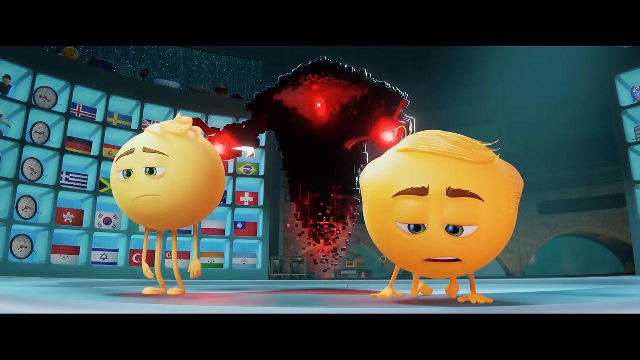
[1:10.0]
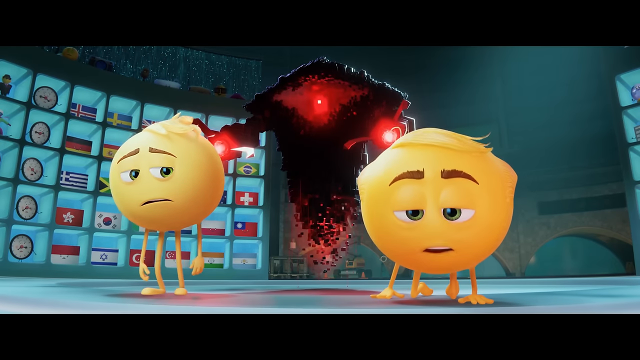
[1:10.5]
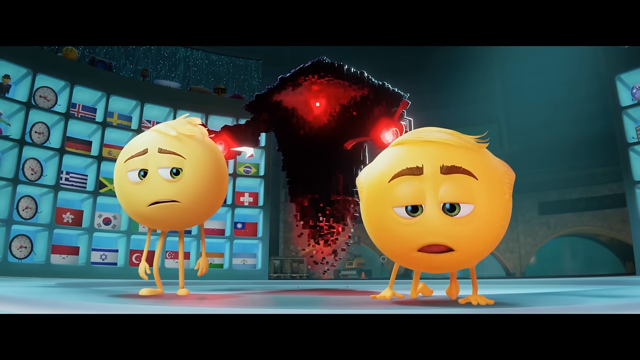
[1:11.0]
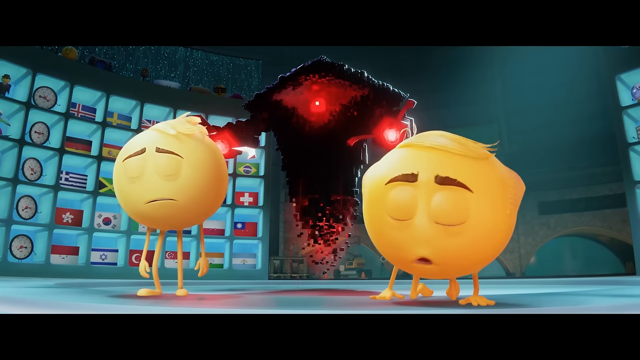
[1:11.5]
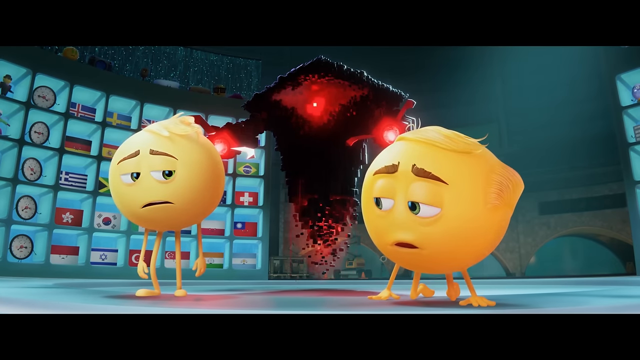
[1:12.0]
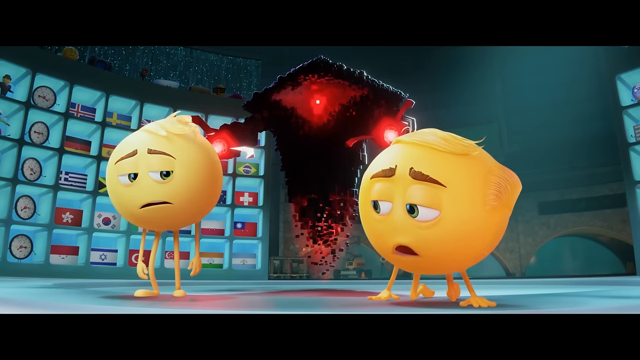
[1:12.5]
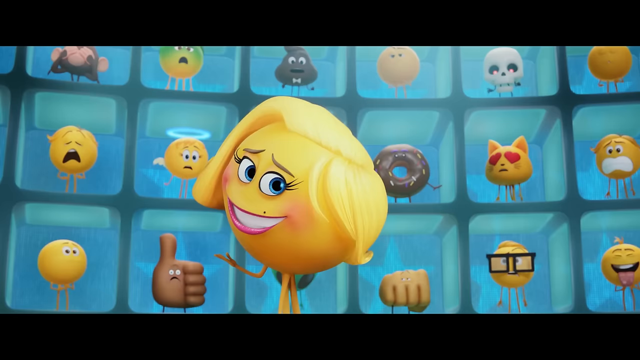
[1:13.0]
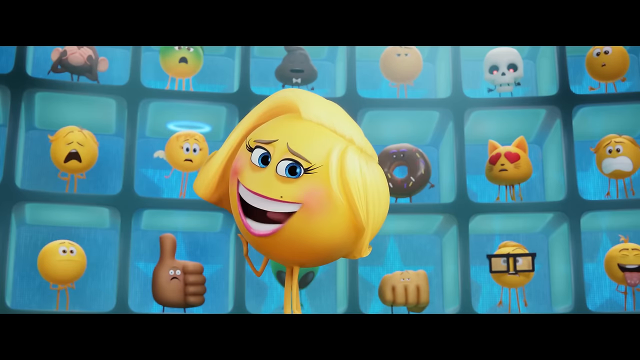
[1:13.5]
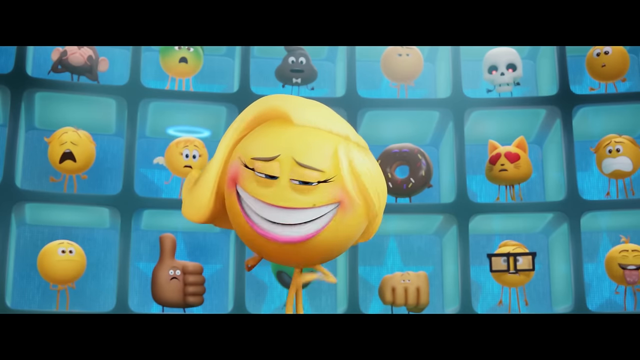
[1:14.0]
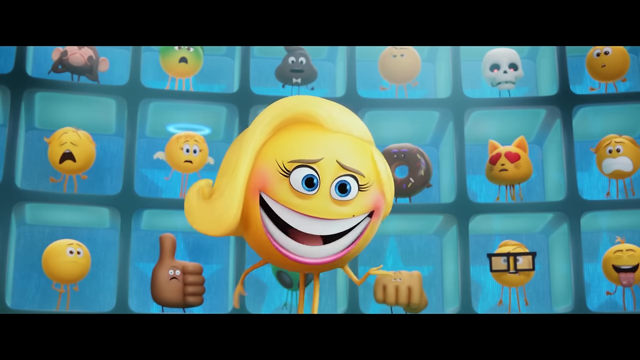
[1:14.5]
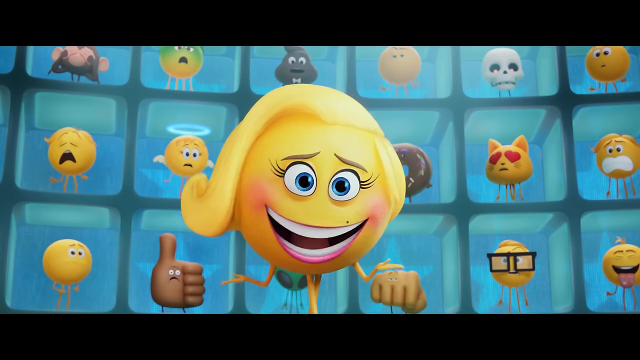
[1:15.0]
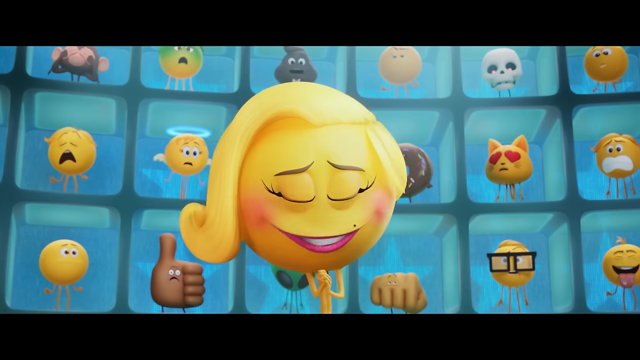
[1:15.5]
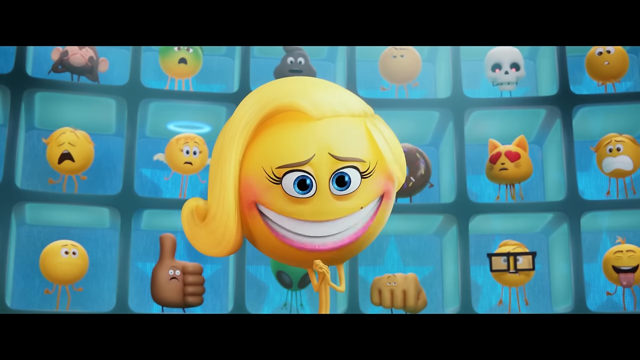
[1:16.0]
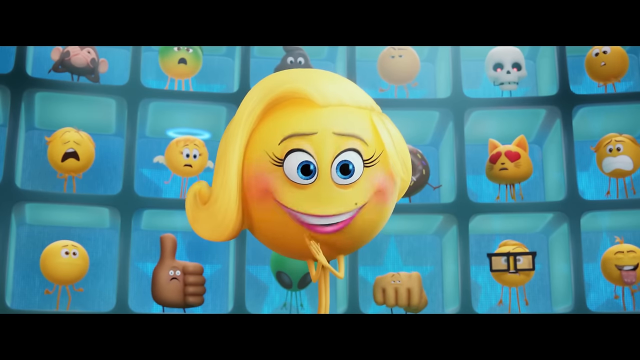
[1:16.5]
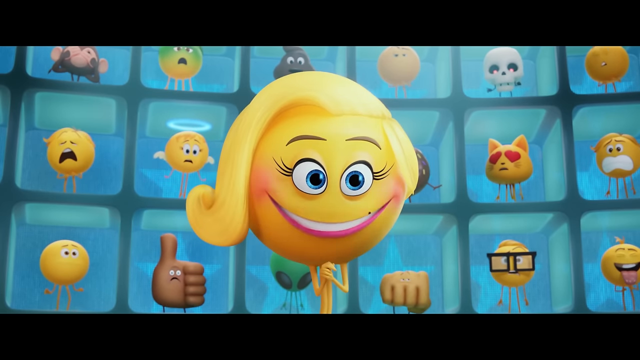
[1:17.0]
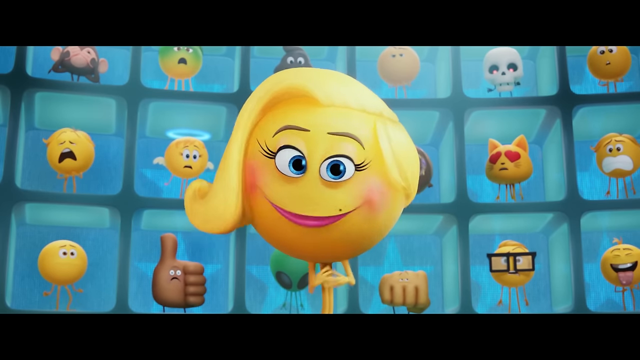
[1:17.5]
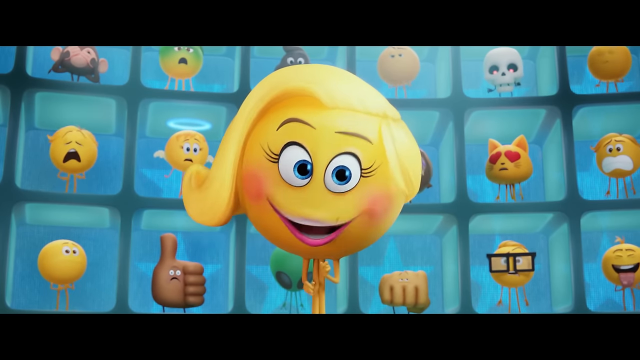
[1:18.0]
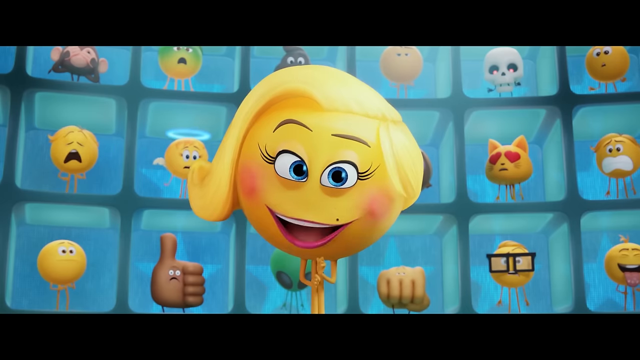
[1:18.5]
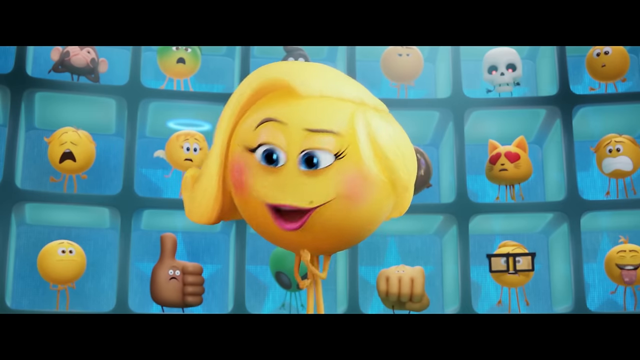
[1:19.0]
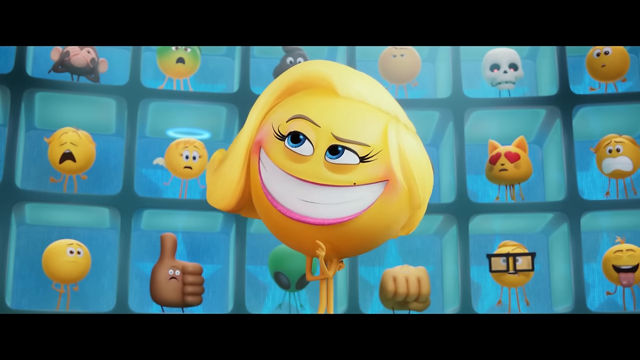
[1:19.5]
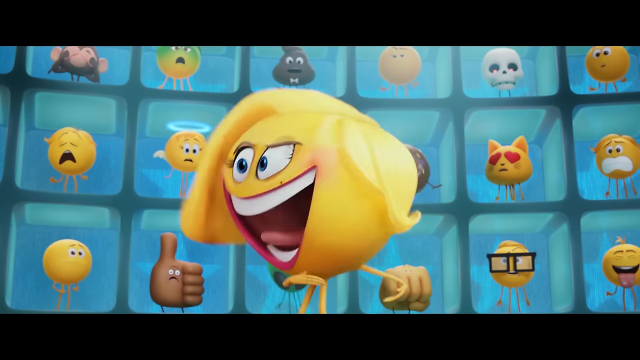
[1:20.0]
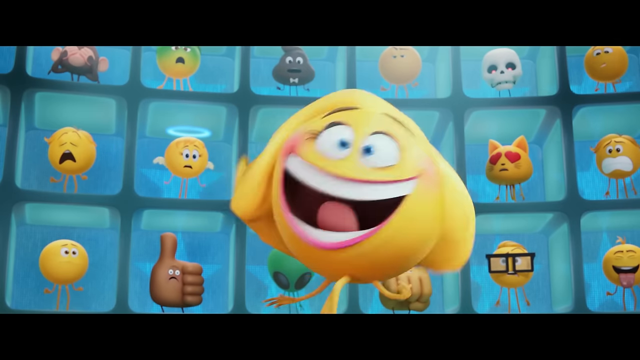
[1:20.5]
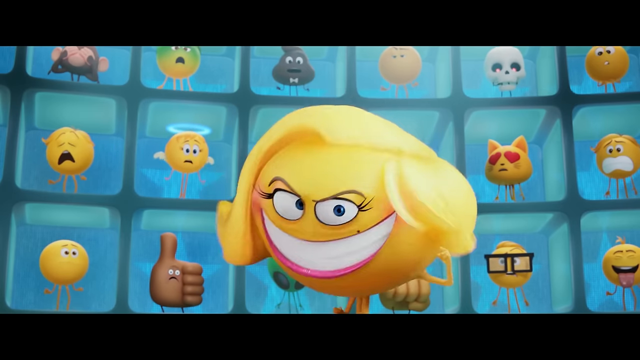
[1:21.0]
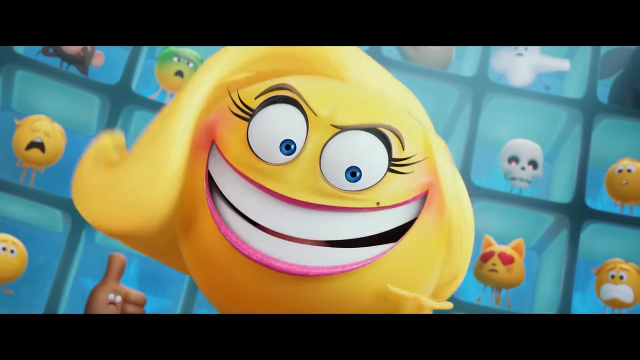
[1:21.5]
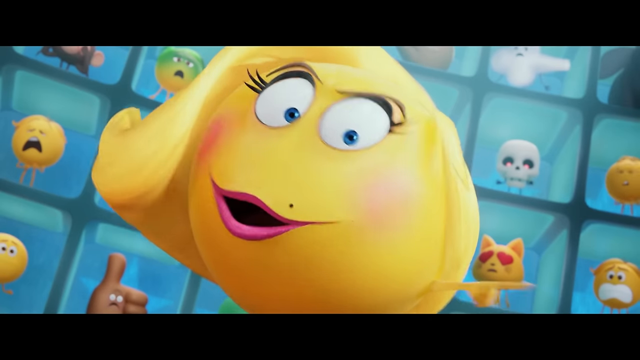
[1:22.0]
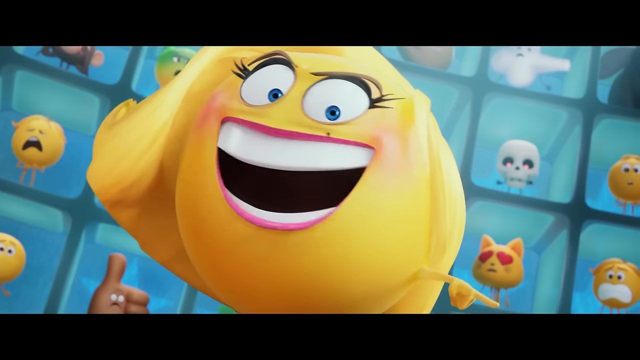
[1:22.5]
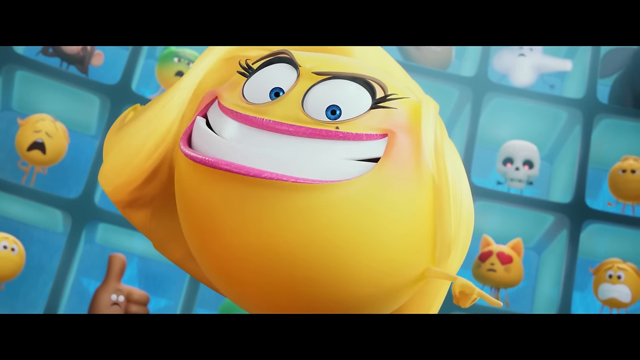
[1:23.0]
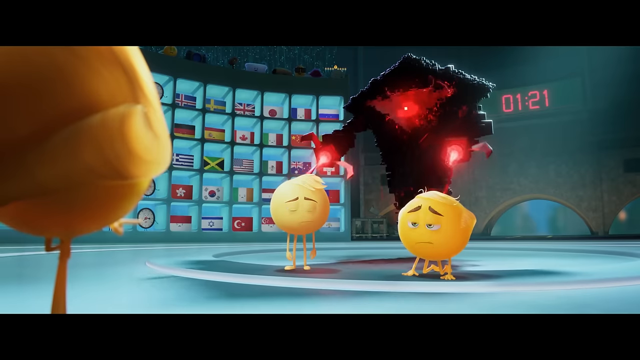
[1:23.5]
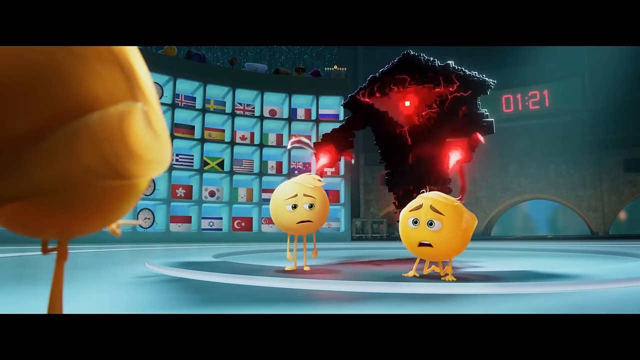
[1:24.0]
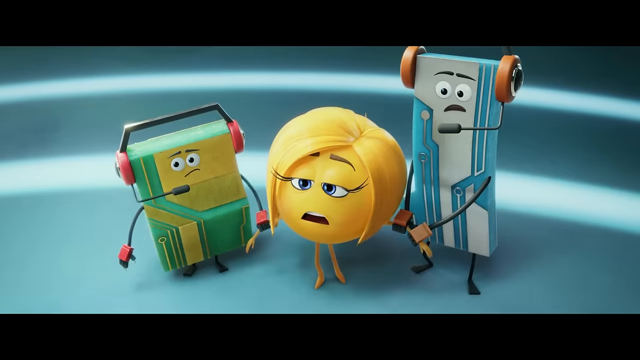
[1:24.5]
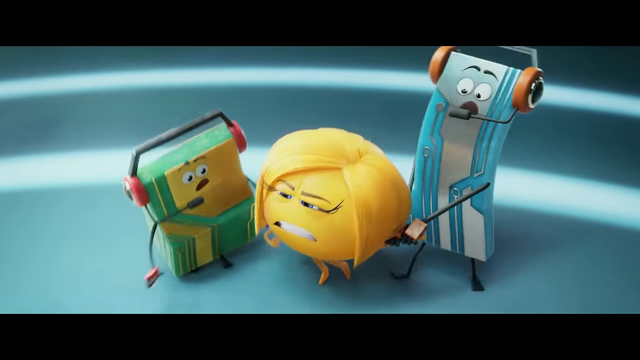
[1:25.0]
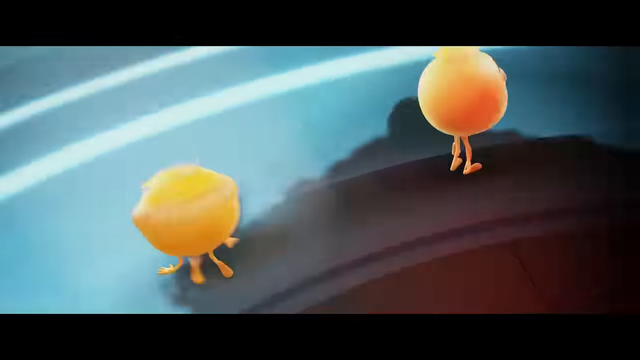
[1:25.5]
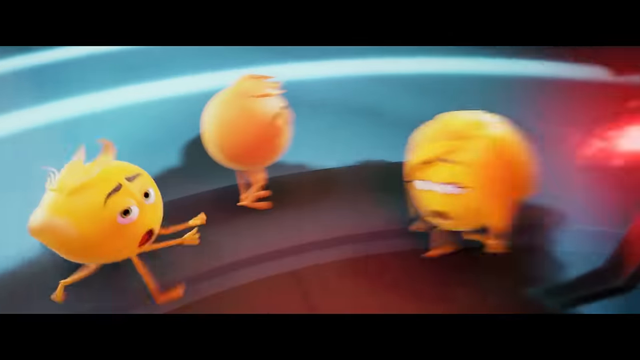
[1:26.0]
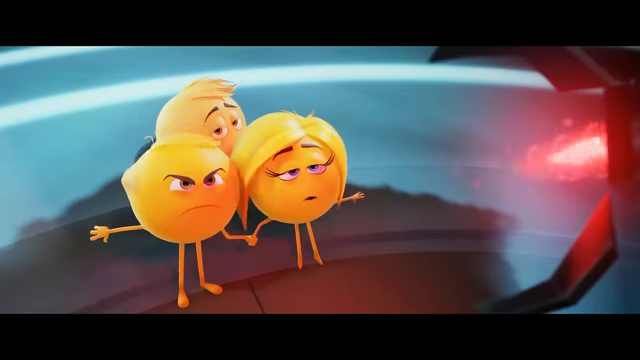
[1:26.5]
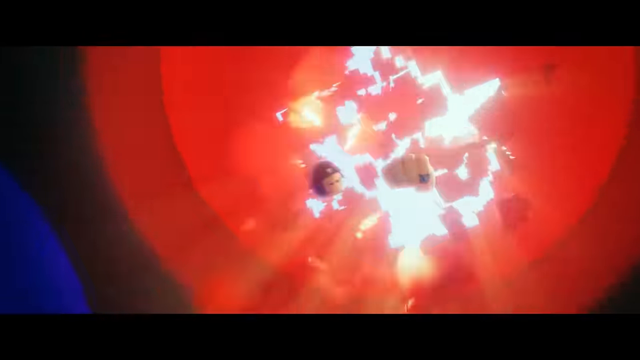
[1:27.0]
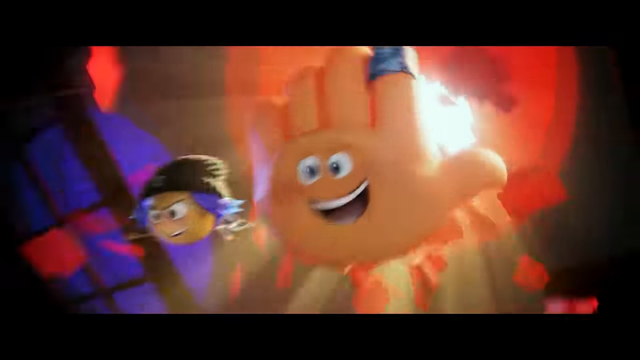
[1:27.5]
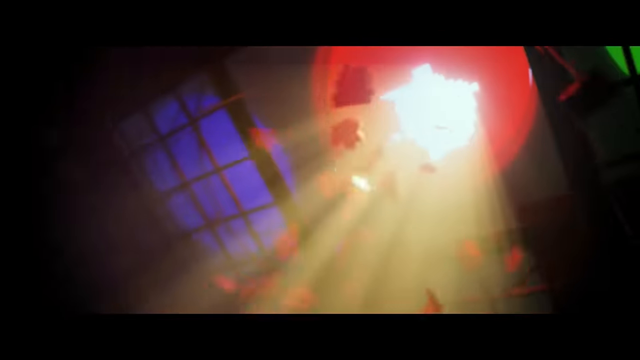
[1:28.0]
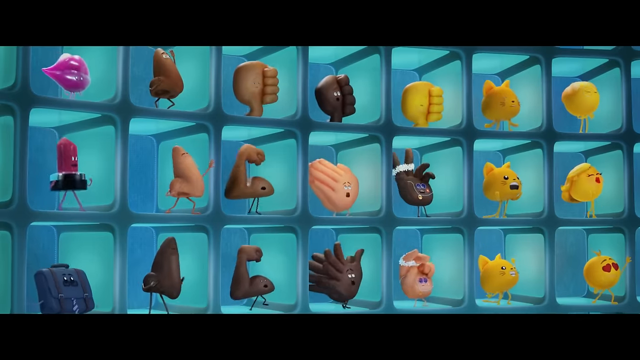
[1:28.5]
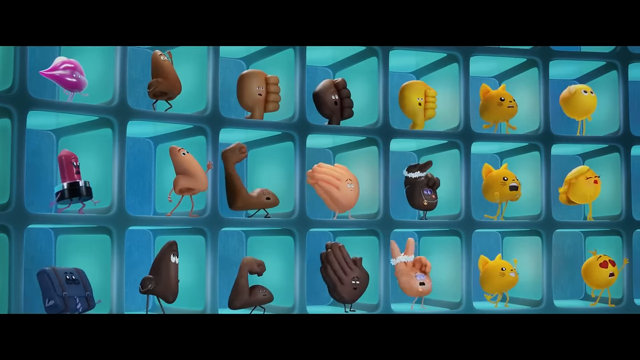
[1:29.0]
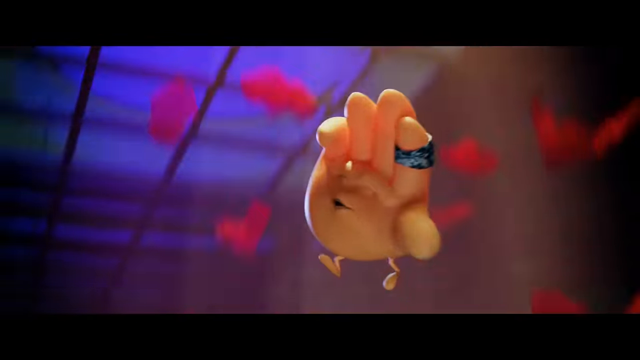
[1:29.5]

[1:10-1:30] The two yellow emojis are in front of a robot that has pointed its blasters at them. The old man emoji appears a bit worried and is on his knees, while the other one is standing up. Smiler keeps talking and smiles quite often, making different smiles. Smiler commands the robot to end the other emojis' lives. Then, in a turn of events, the robot is destroyed from the inside, and a high five emoji comes out of the roof into the scene. The high five emoji is a right palm wearing a bandana on the pointing finger. The emojis are surprised as it enters, trying to intervene and stop Smiler.